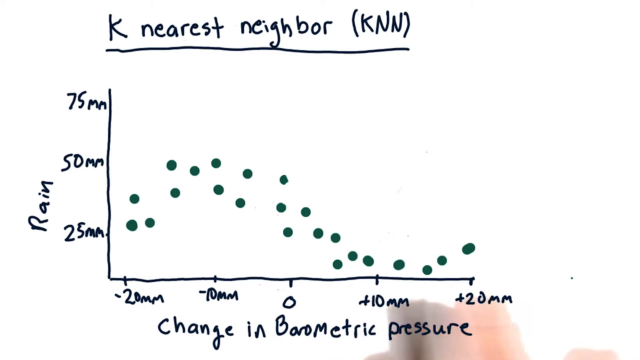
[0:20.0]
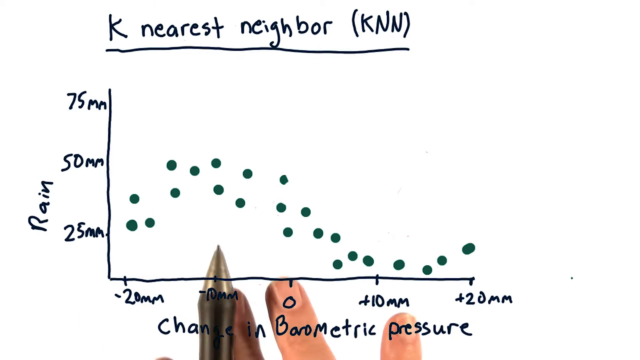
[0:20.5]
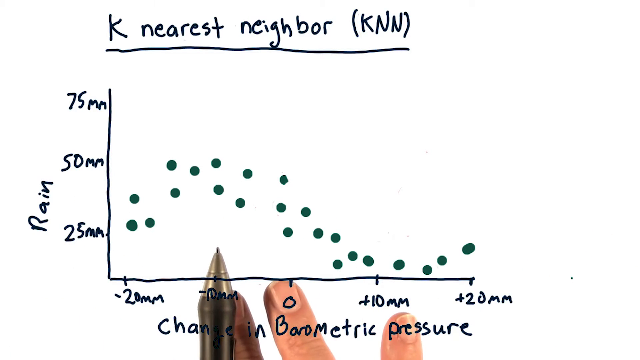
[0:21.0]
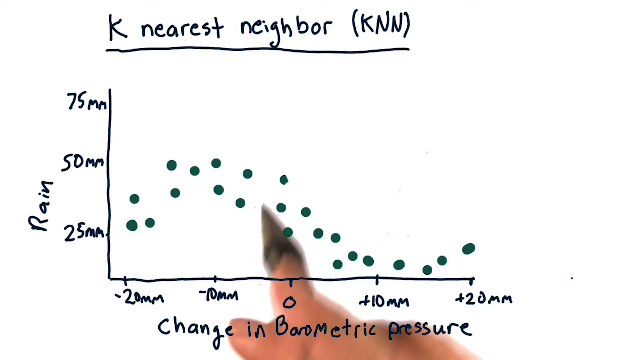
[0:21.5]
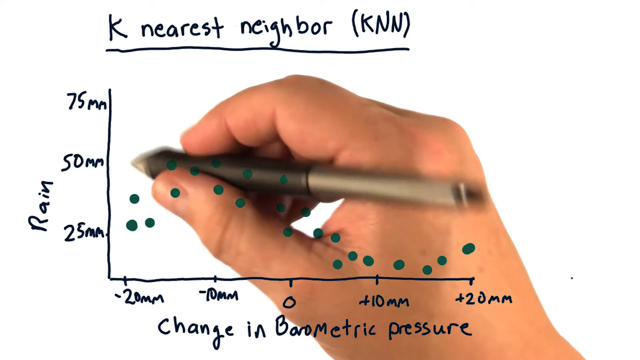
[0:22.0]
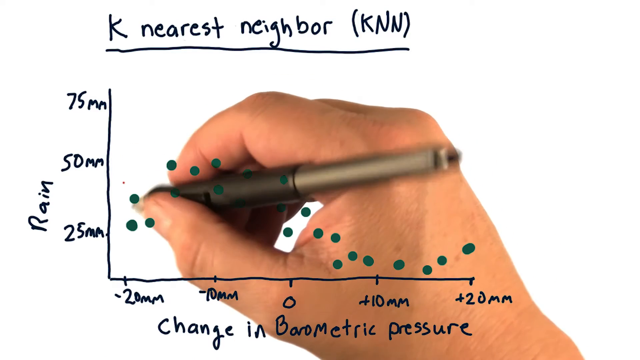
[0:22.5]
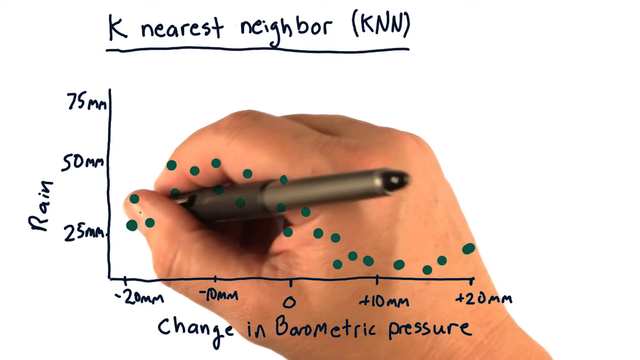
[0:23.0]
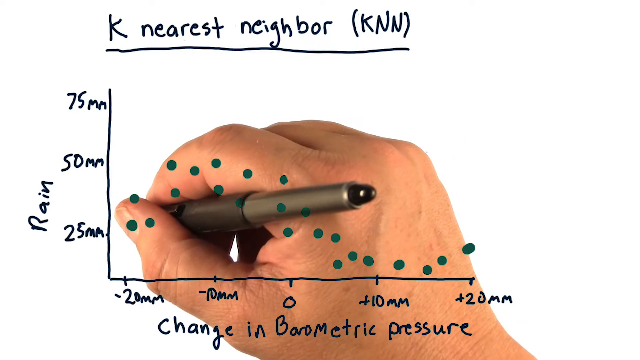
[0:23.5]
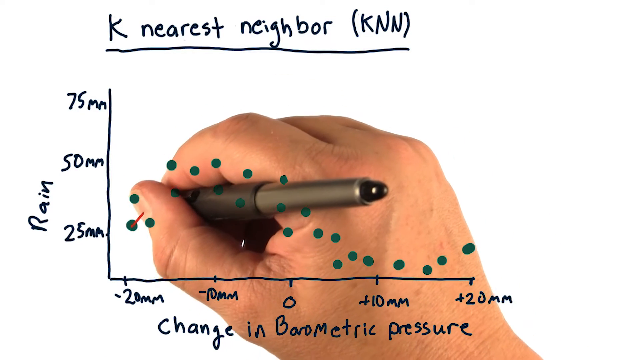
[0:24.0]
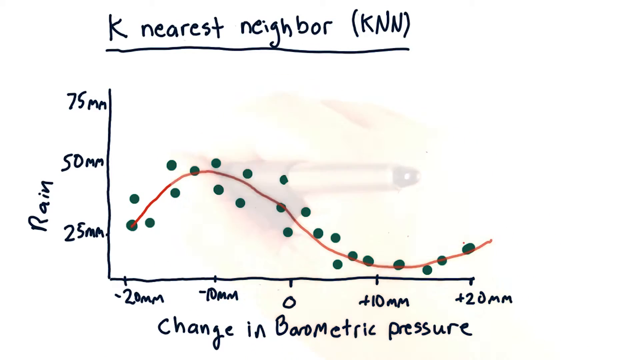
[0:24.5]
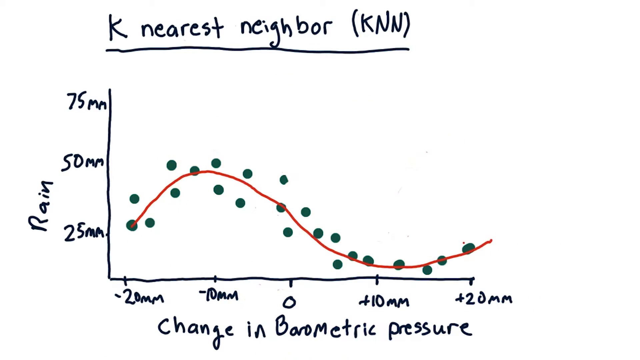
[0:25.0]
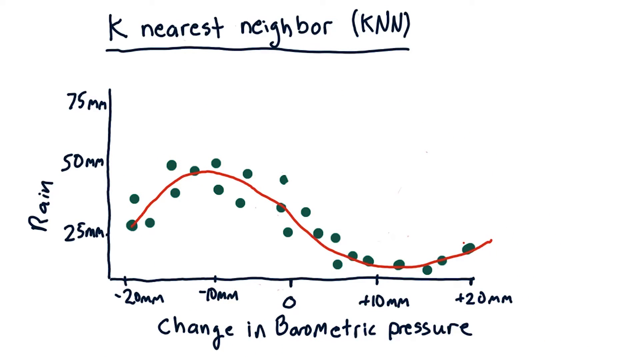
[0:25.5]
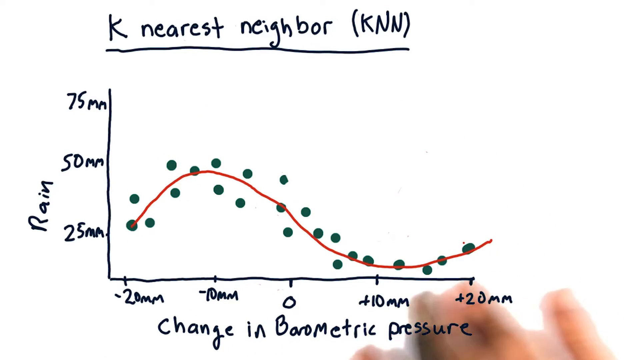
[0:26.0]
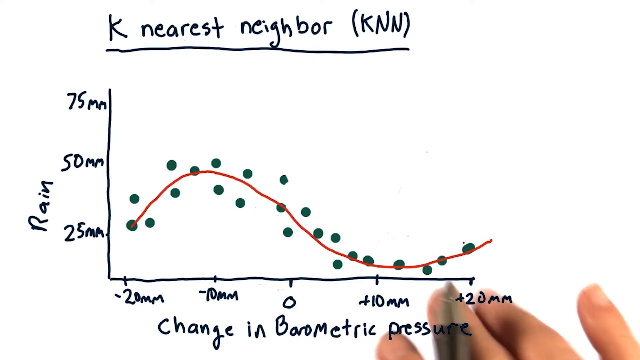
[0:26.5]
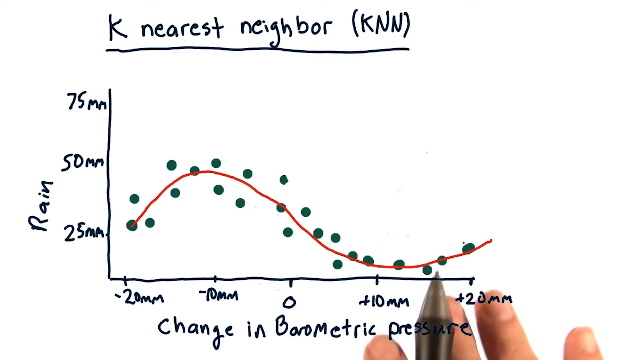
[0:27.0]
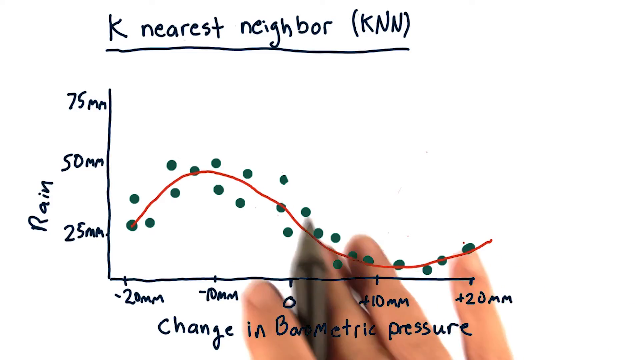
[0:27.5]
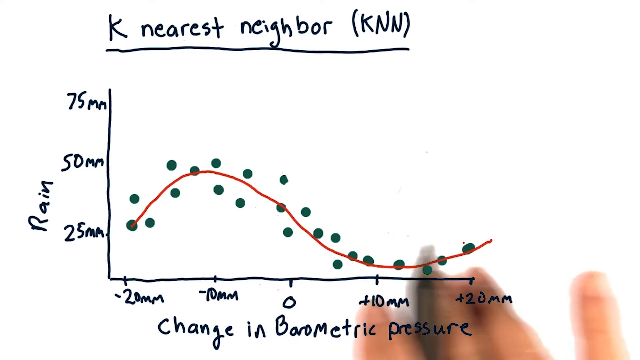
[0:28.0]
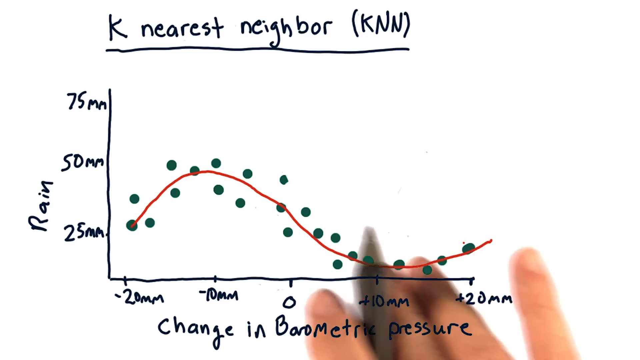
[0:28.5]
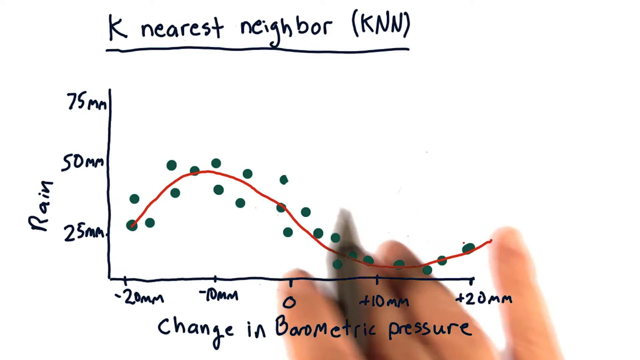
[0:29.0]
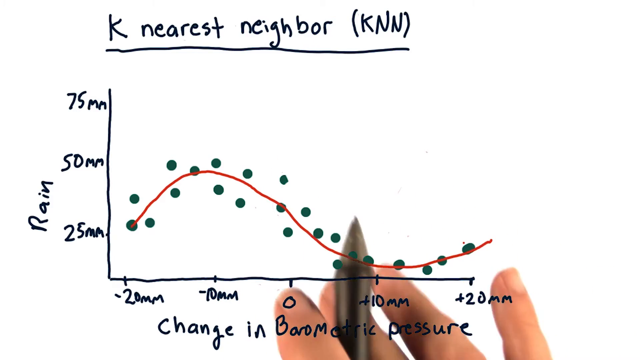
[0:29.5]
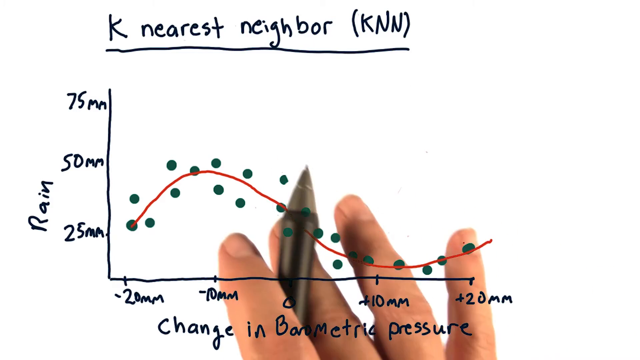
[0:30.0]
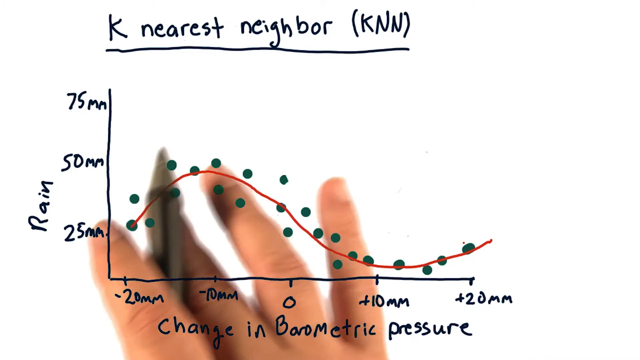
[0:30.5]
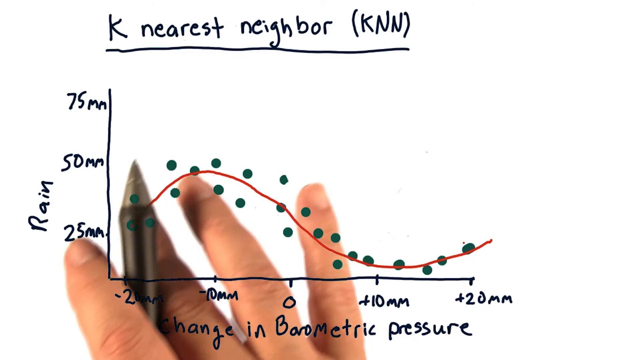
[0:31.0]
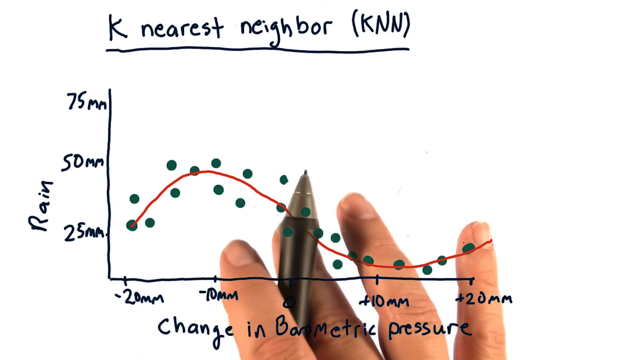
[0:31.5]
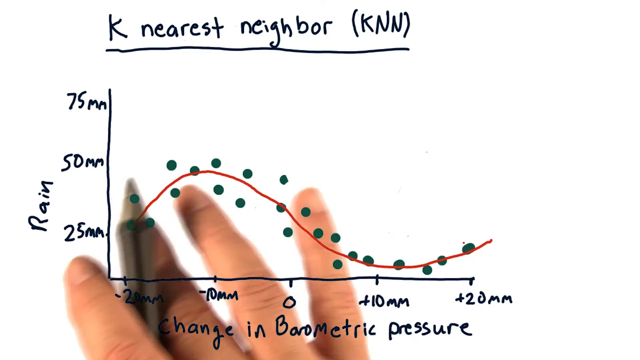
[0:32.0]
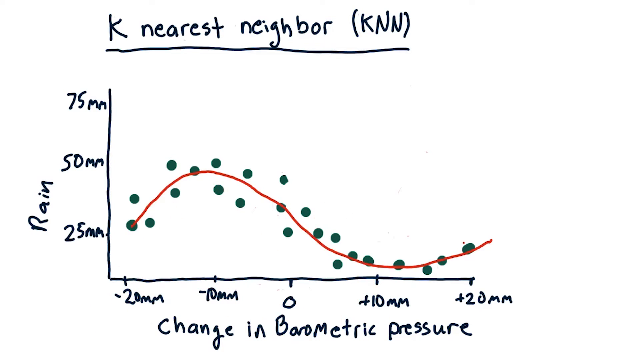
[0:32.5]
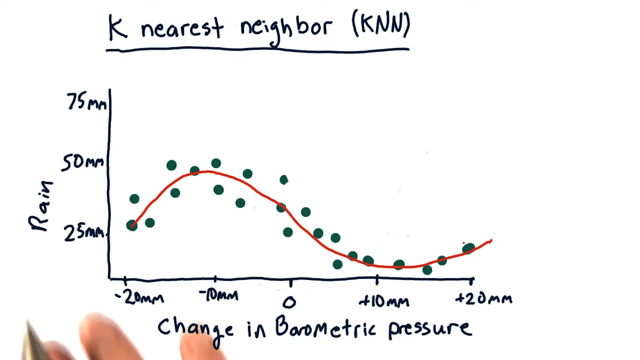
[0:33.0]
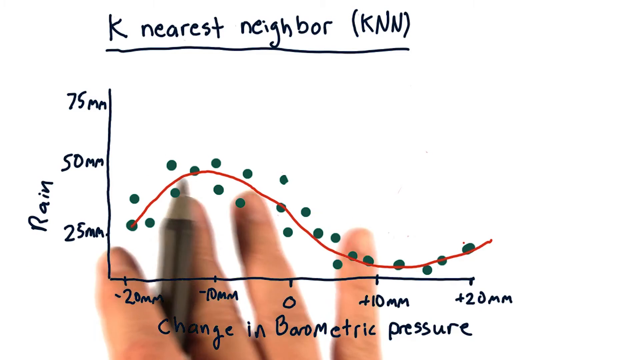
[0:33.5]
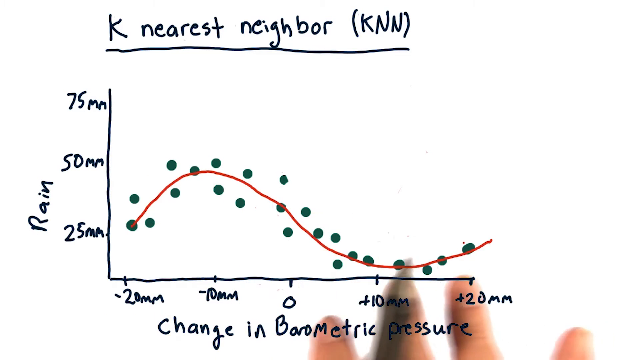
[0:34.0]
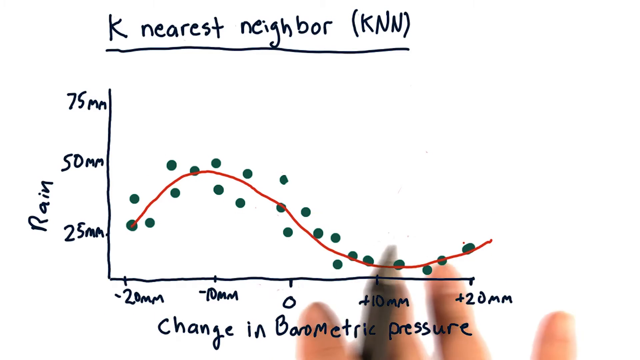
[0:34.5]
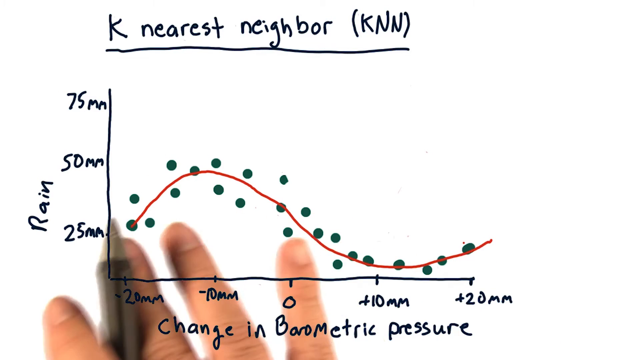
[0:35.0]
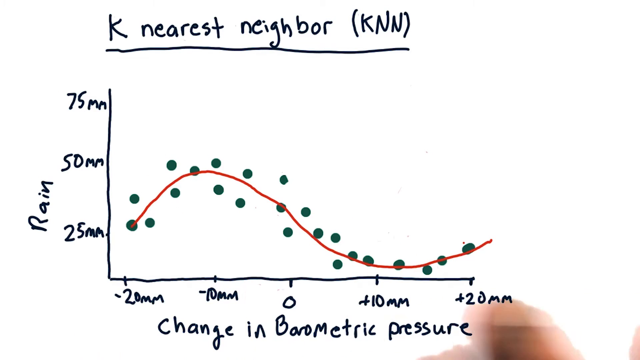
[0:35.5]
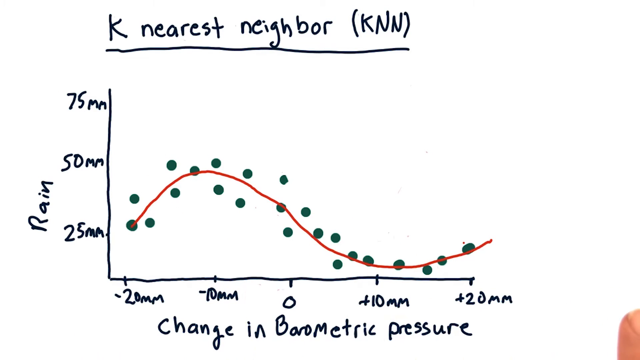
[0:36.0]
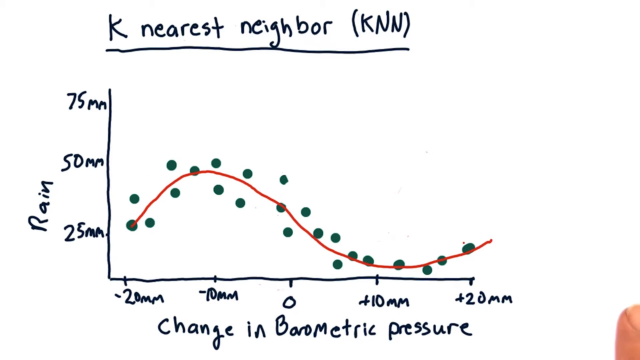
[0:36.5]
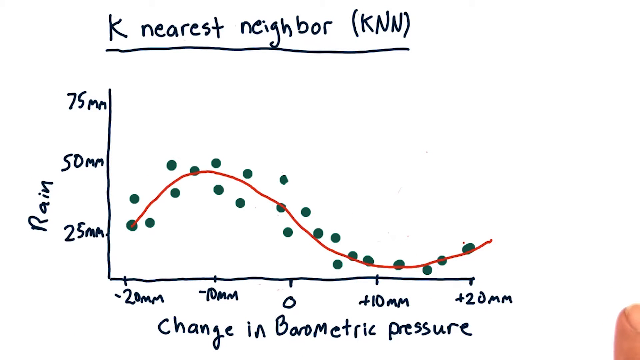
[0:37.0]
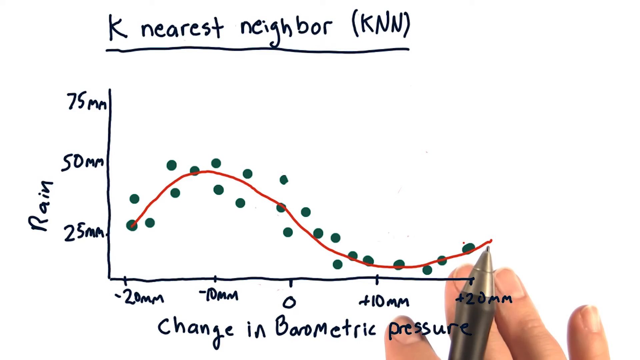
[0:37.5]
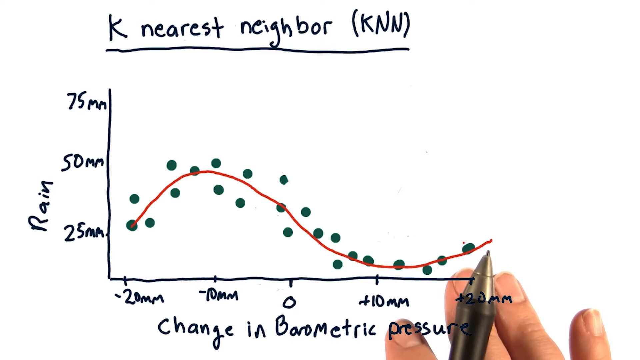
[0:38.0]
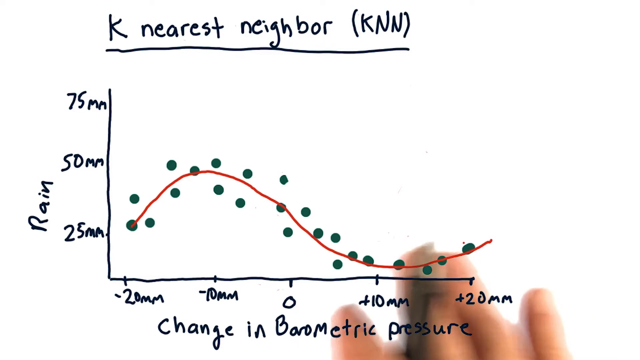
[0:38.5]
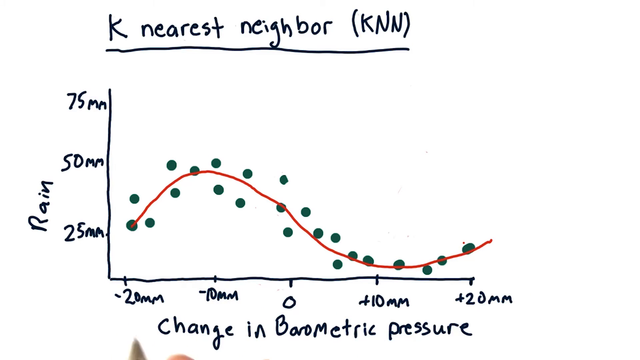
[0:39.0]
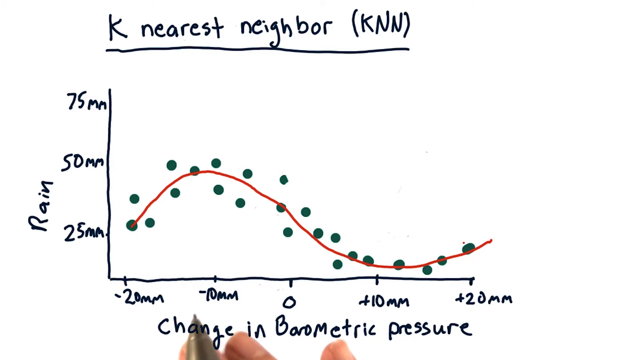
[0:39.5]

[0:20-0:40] The predominantly white screen with the hand-drawn graph titled 'K nearest neighbor (KNN)' remains. The fingers of the right hand appear on screen at the bottom, move along to the left side and then across to the right again, as if the person is speaking and using the hand to emphasize their speech. The hand then rises into the middle of the screen behind the graph, and the electronic pen begins to draw a red line from the furthest-left green dot, at the height of 25mm. The hand fades out, leaving the graph with the completed red line drawn as a wave from left to right across the chart, arcing up and then down, as if to show the median deposit of the green dots. The hand appears back on the right of the frame, and the fingers appear to loop left to right along the arc of the red line as if to draw attention to its curves. This is repeated, and then the hand moves along the bottom of the screen from right to left and back again.